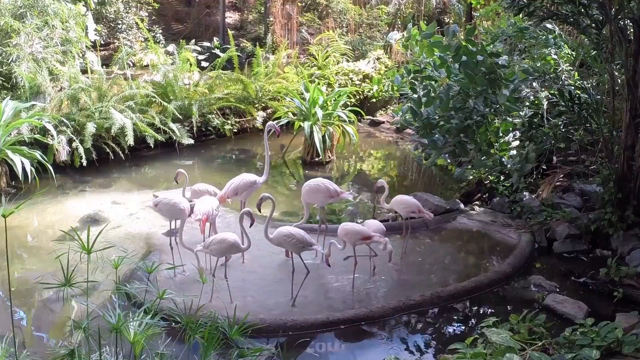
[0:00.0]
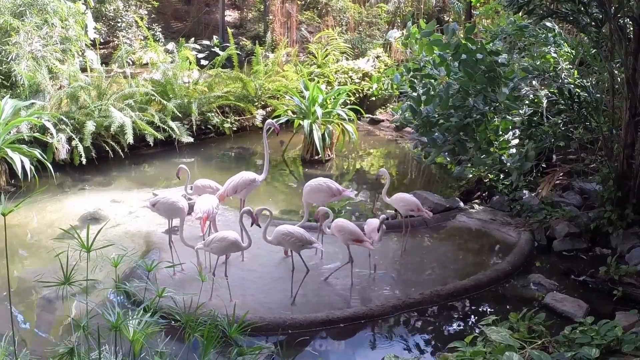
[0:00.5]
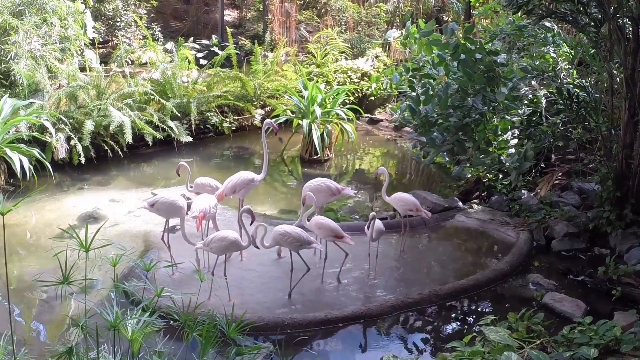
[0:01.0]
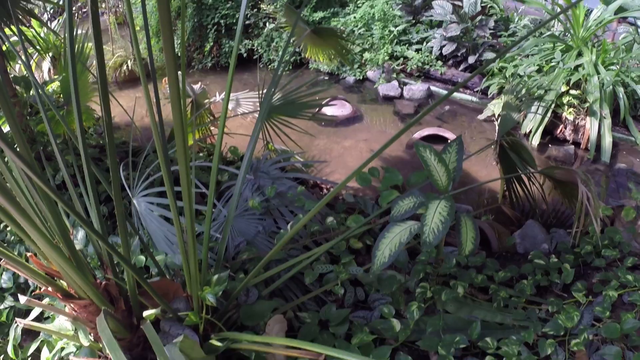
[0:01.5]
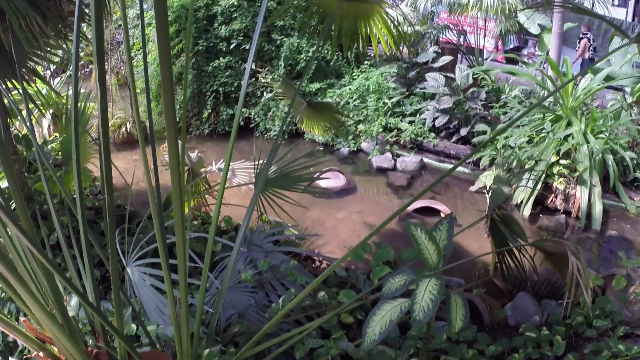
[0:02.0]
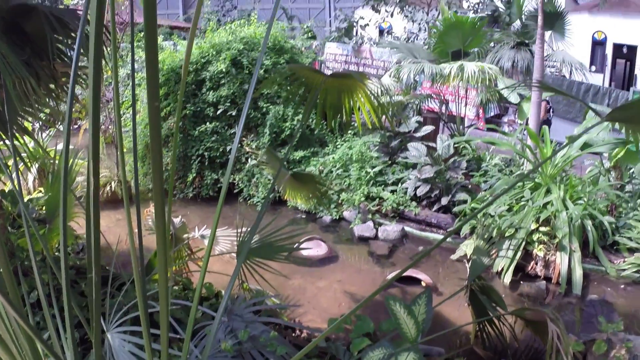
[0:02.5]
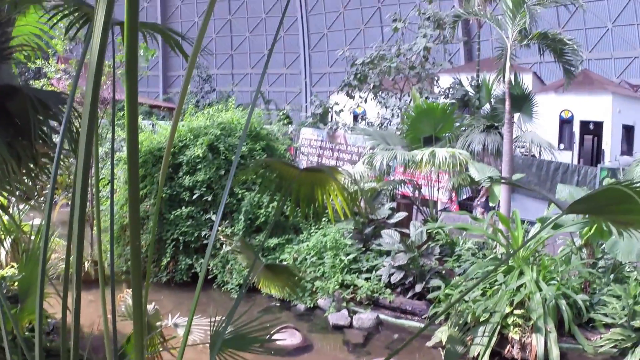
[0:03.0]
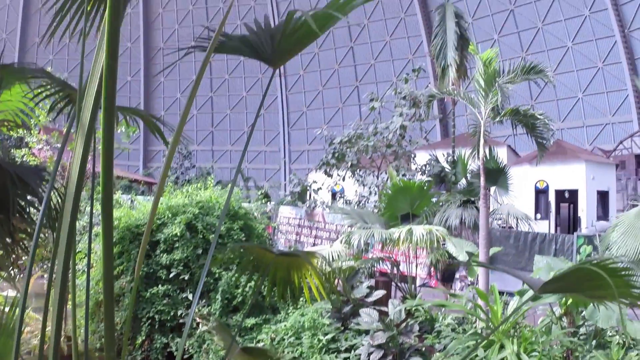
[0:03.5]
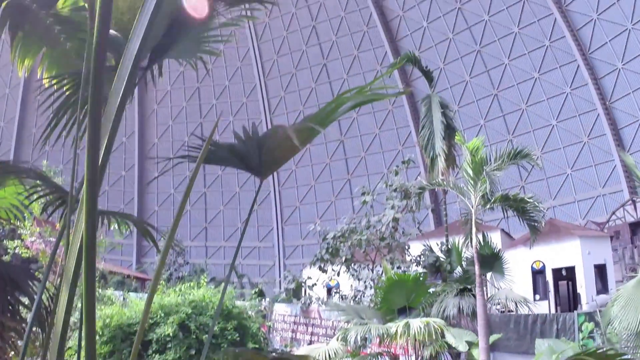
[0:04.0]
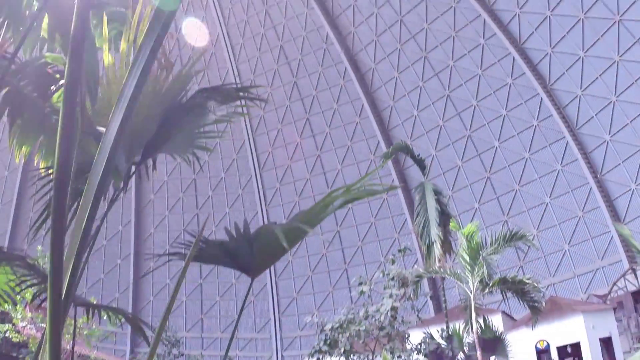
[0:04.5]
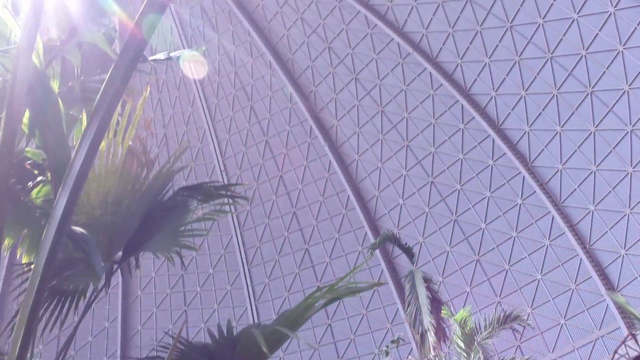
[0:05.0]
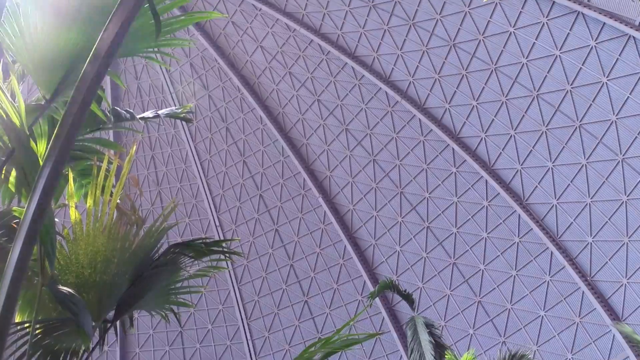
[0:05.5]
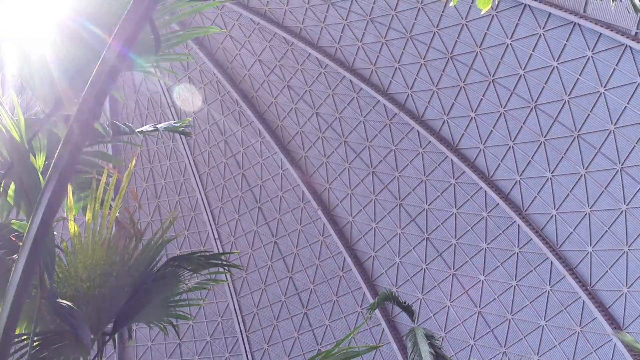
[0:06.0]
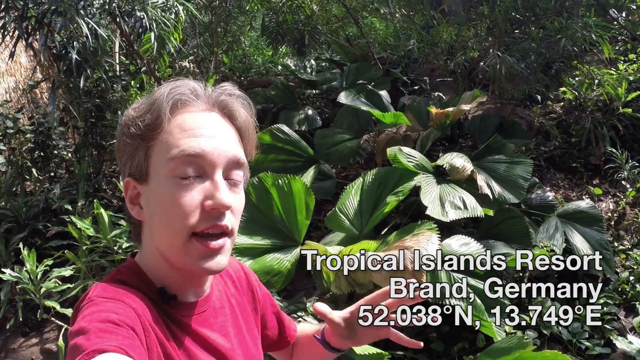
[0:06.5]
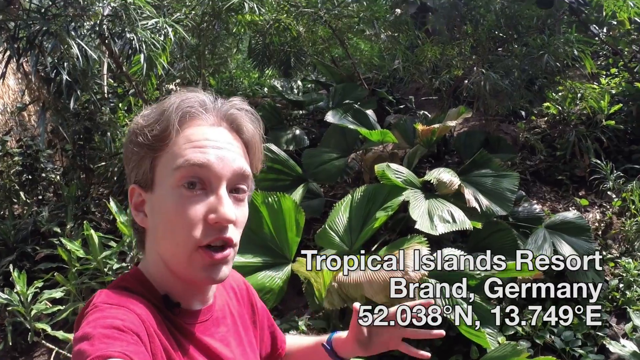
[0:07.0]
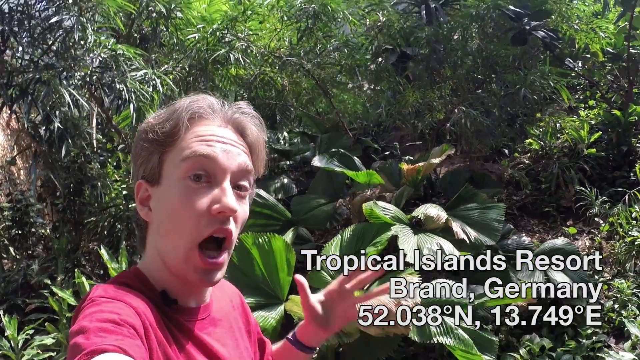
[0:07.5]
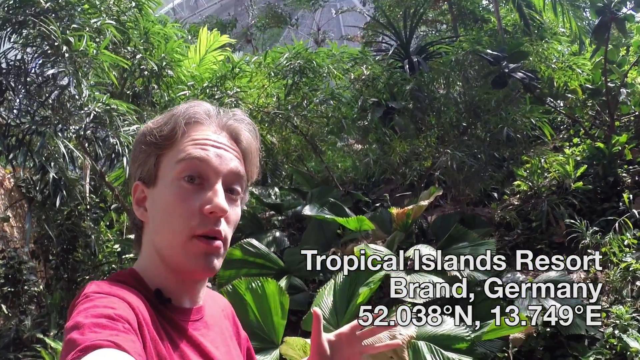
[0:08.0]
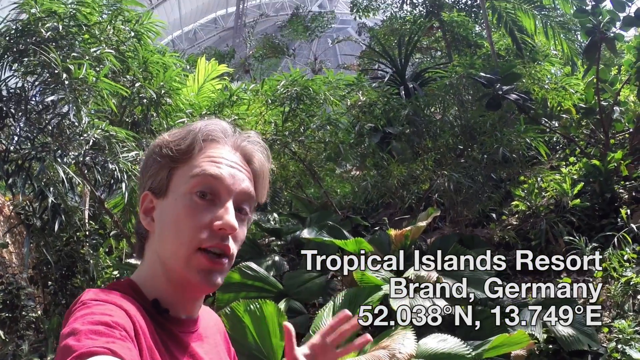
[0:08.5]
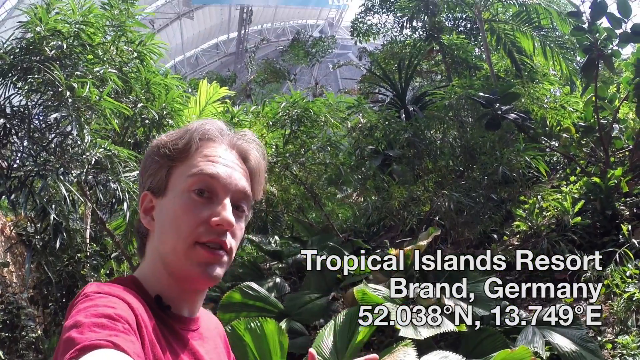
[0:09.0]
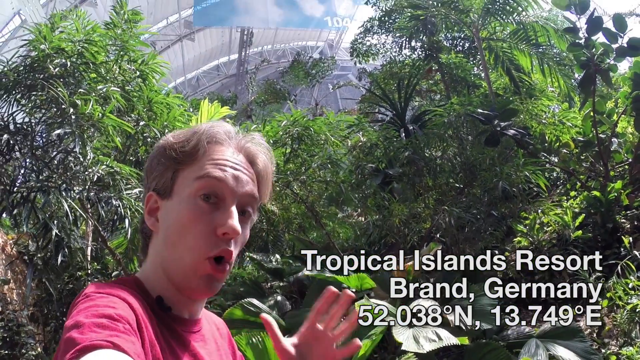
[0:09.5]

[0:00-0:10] A group of light pink flamingos stands in the water of a pond, with one larger flamingo in the center and smaller ones around it. The birds have very long, thin legs and very long, thin necks, and the edges of the pond are lined with greenery and ferns. The view then changes to a higher shot of palm trees and a white house, with some greenery and what looks like a large silver building in the background. A man with brown hair in a red t-shirt talks to the camera, standing in front of lush greenery, trees and palm trees, and a title reads "Tropical Islands Resort, Brand Germany"; he is apparently speaking about the resort. The scene then returns to the pond with the pink flamingos.